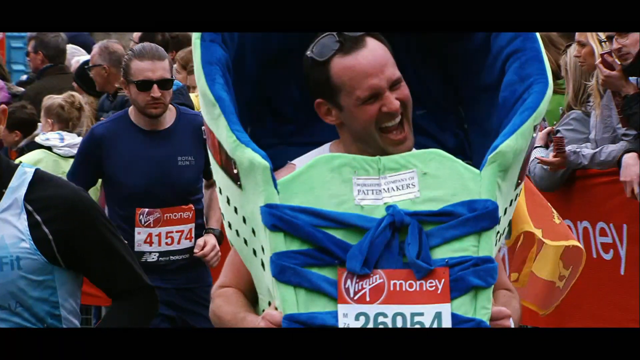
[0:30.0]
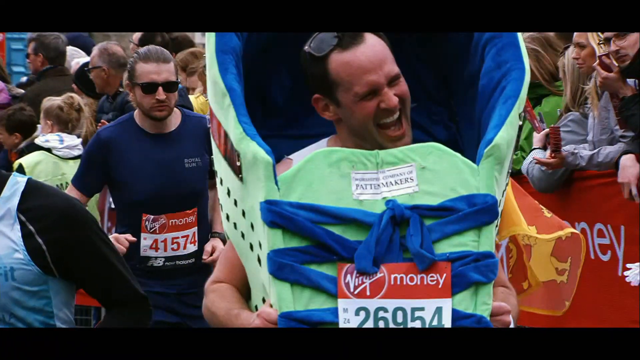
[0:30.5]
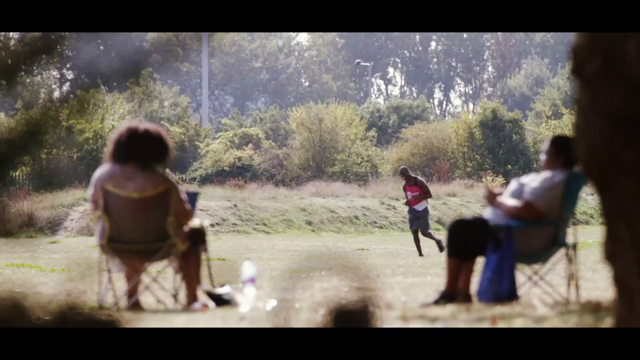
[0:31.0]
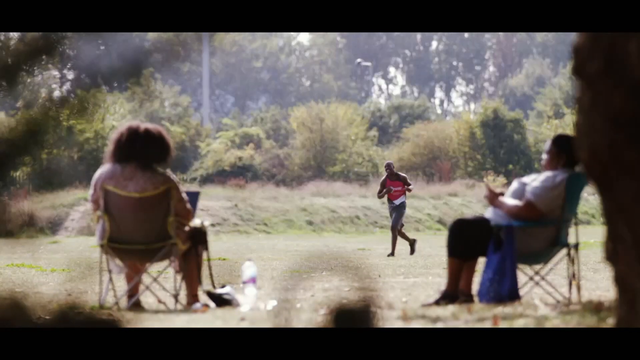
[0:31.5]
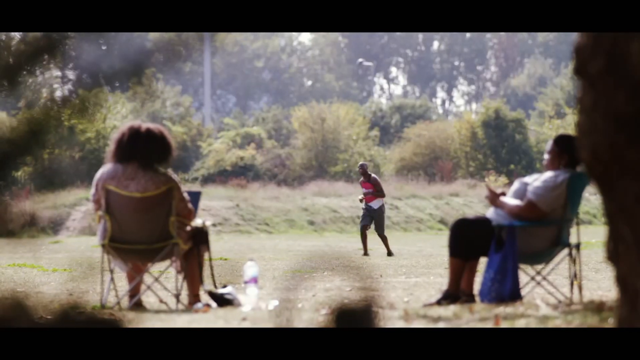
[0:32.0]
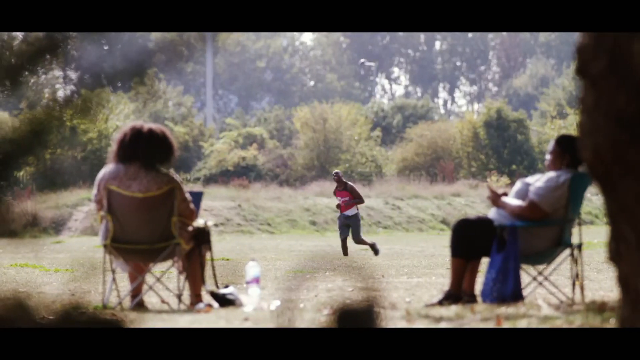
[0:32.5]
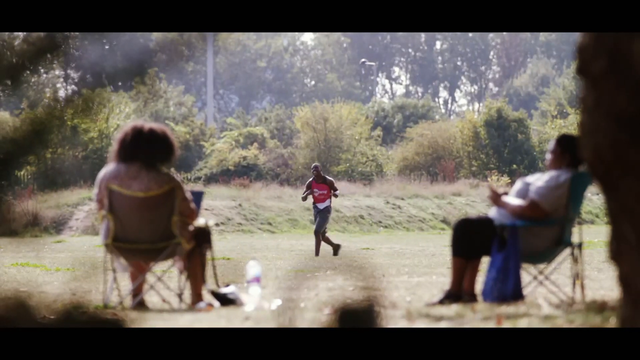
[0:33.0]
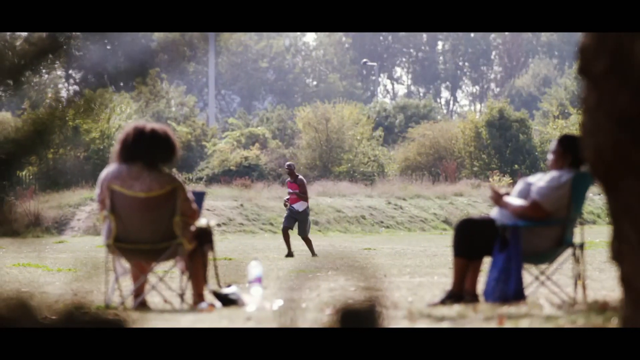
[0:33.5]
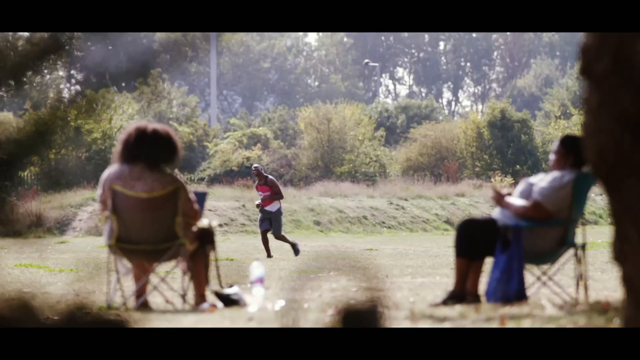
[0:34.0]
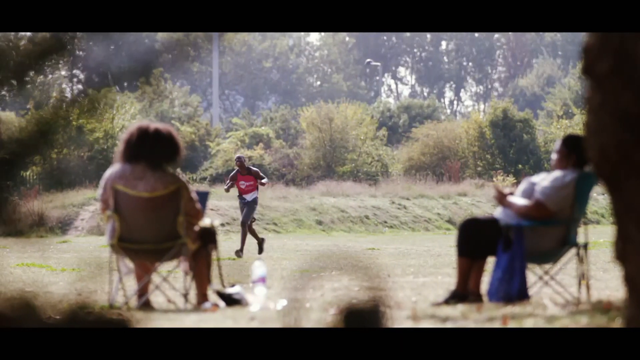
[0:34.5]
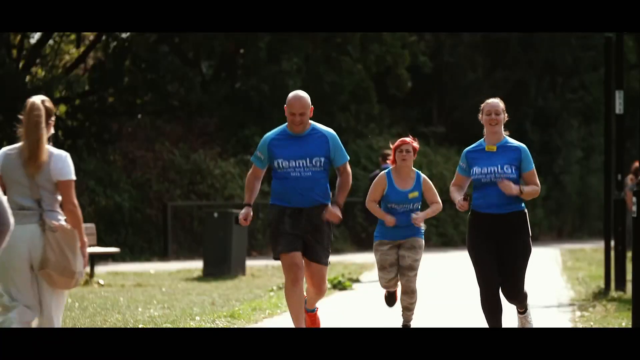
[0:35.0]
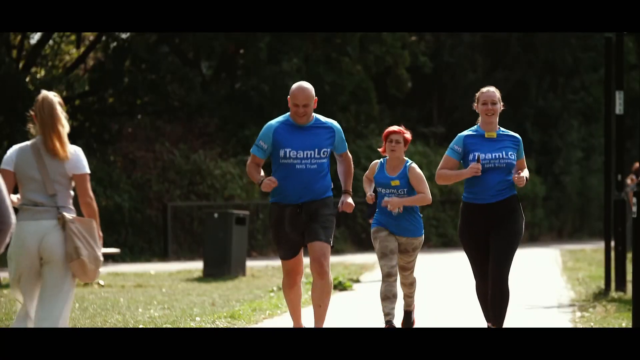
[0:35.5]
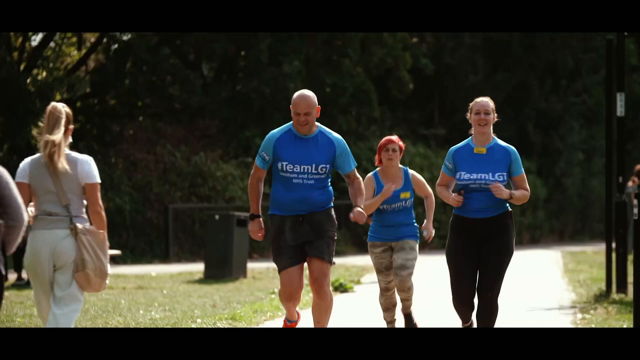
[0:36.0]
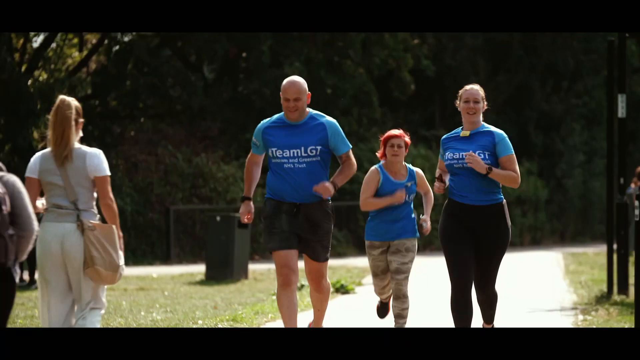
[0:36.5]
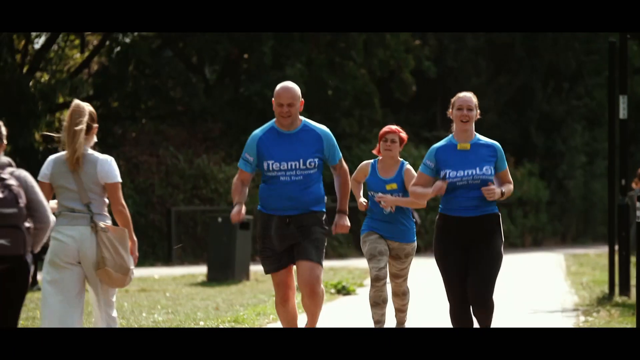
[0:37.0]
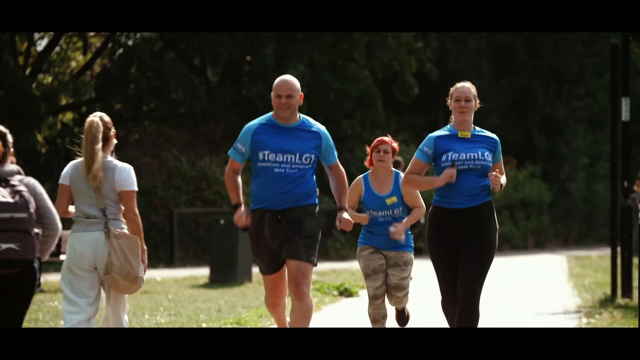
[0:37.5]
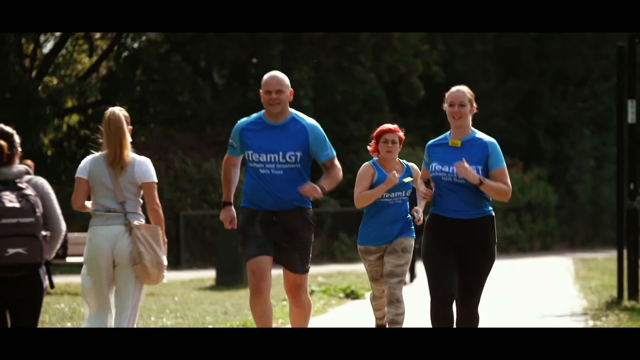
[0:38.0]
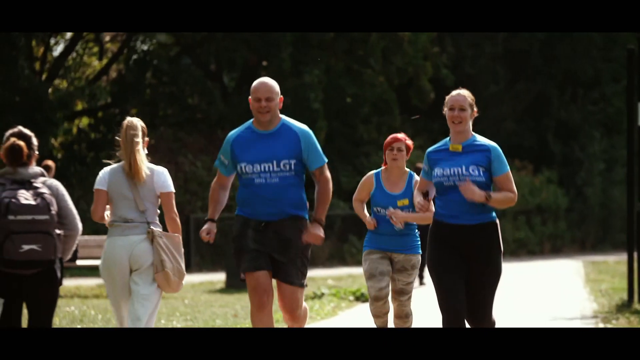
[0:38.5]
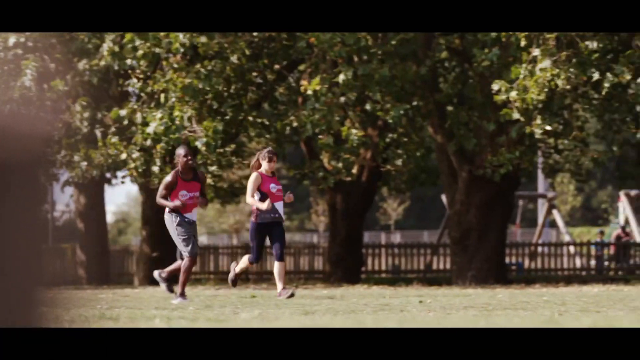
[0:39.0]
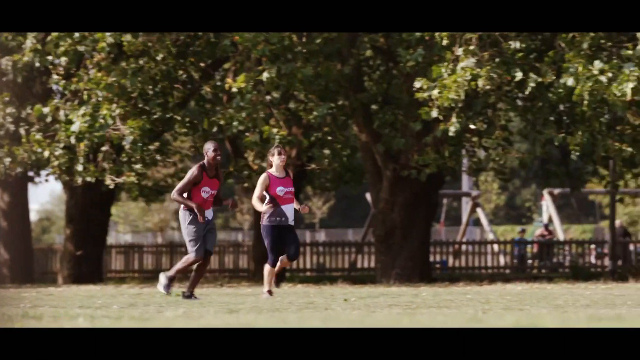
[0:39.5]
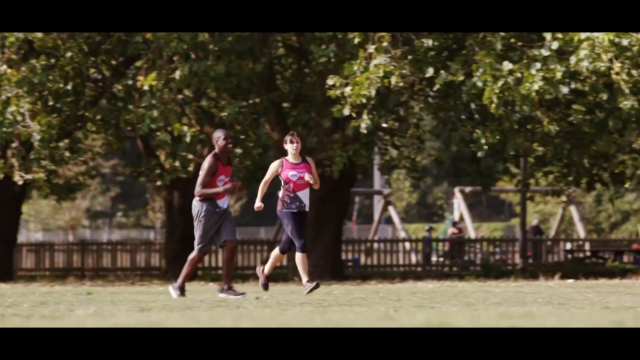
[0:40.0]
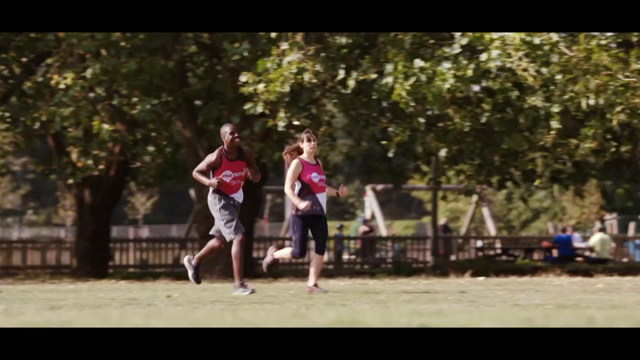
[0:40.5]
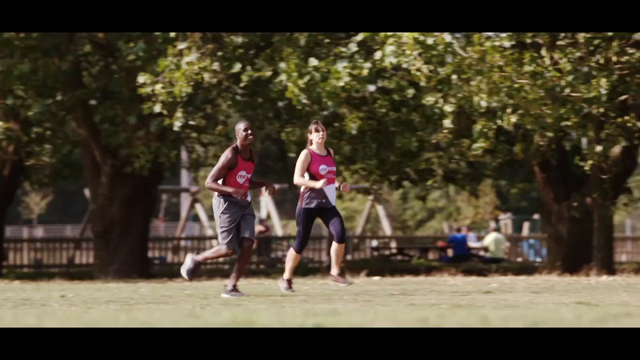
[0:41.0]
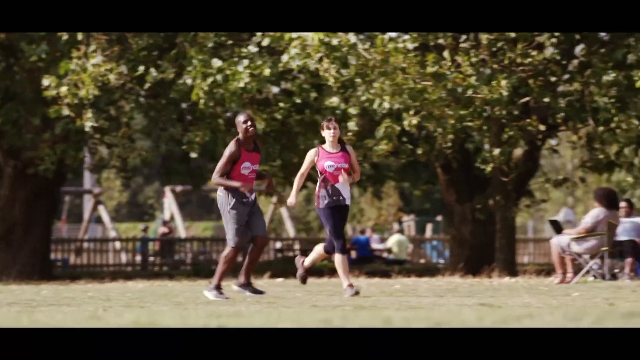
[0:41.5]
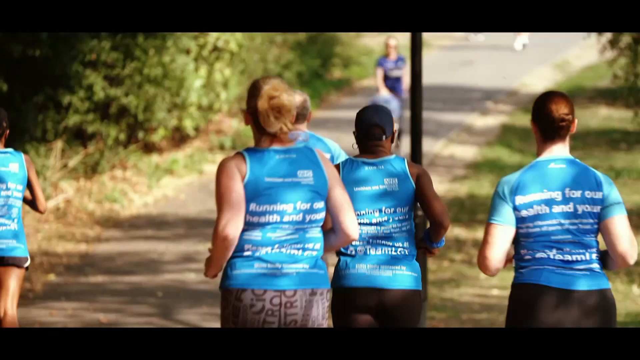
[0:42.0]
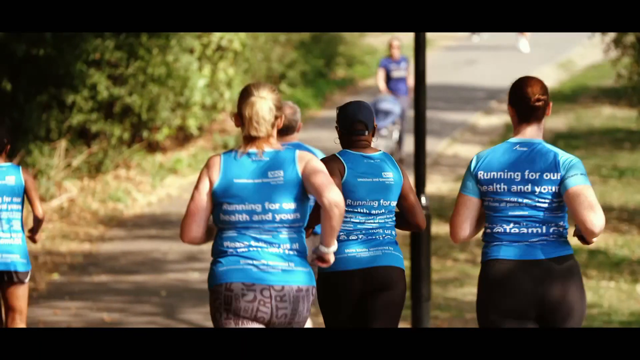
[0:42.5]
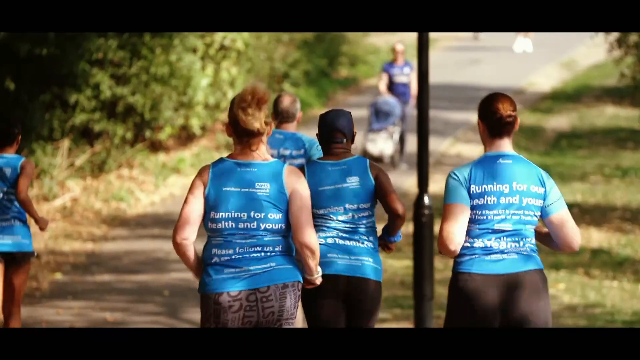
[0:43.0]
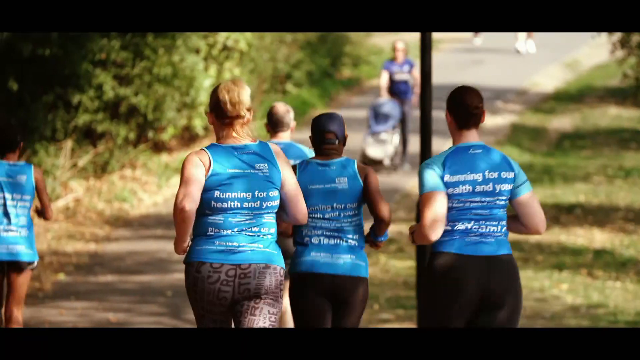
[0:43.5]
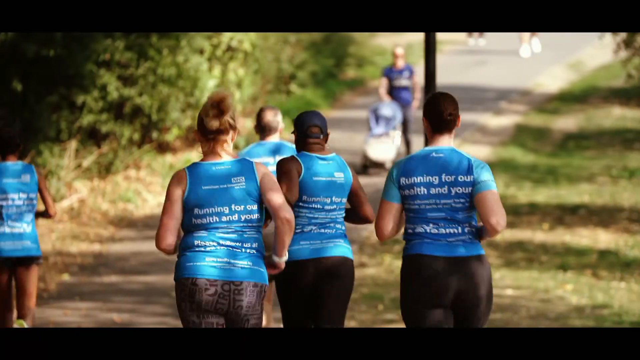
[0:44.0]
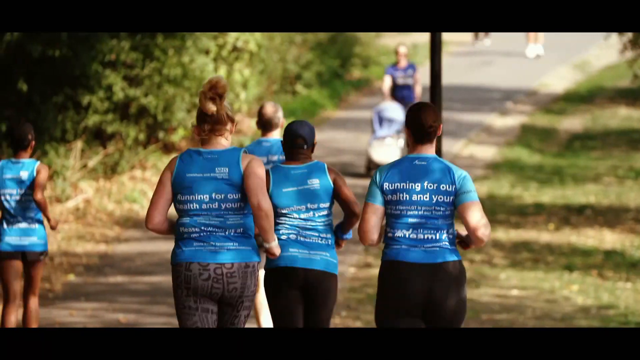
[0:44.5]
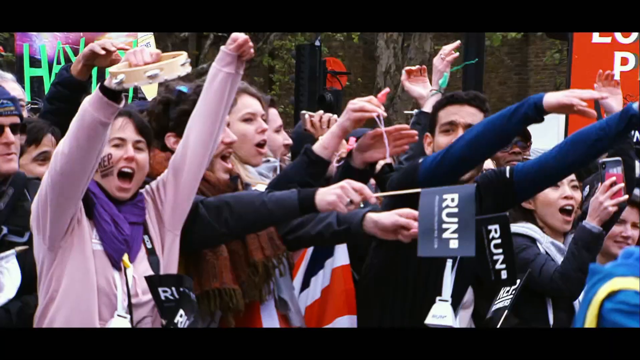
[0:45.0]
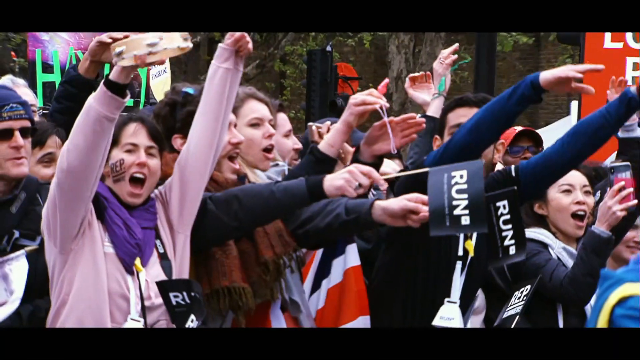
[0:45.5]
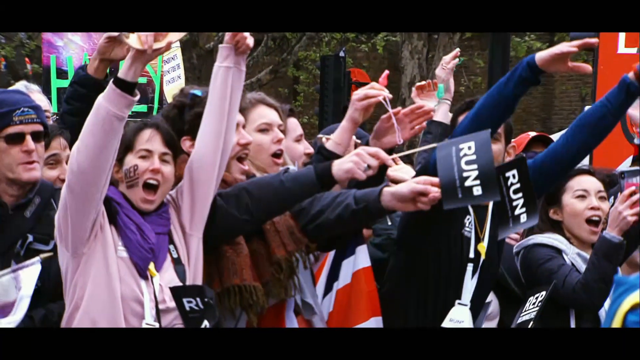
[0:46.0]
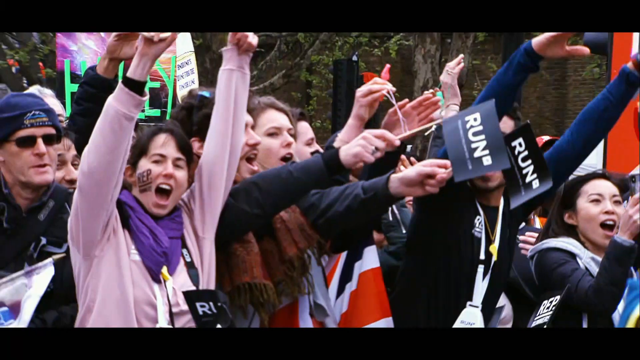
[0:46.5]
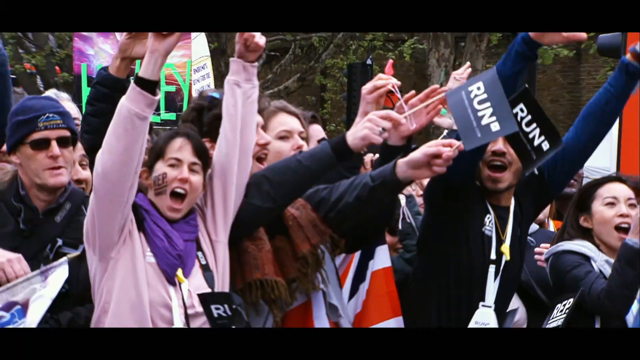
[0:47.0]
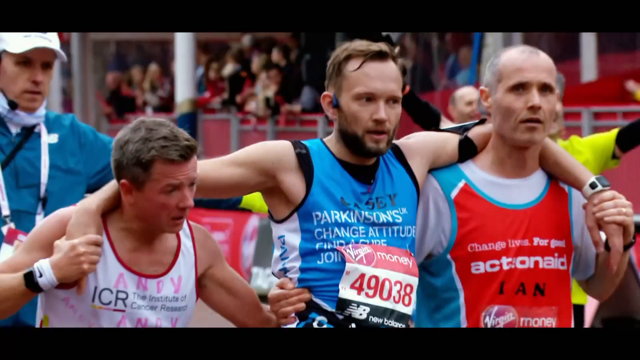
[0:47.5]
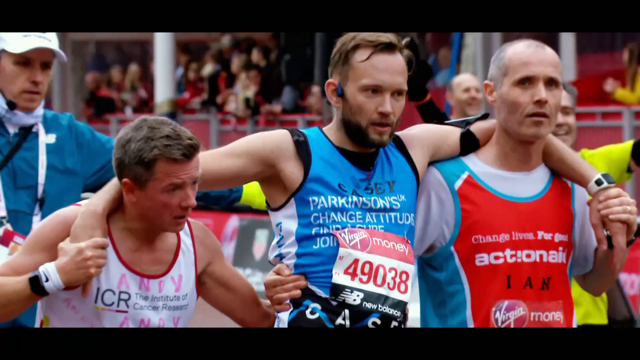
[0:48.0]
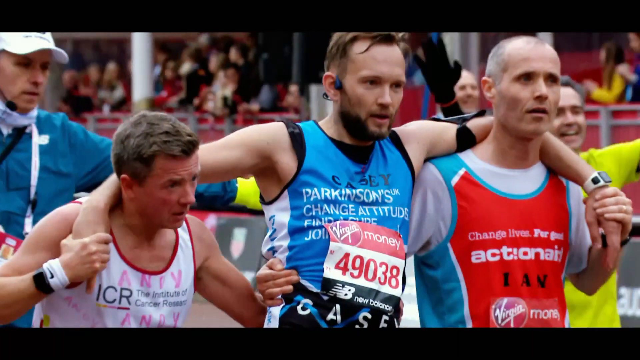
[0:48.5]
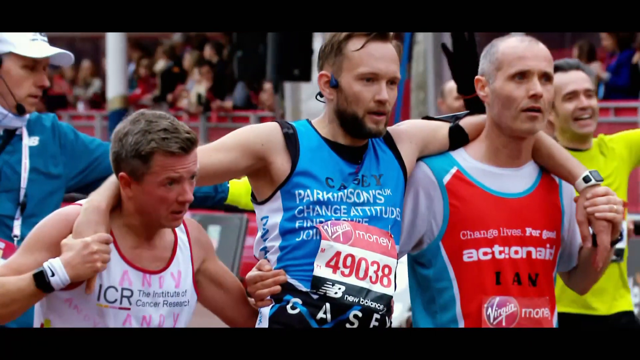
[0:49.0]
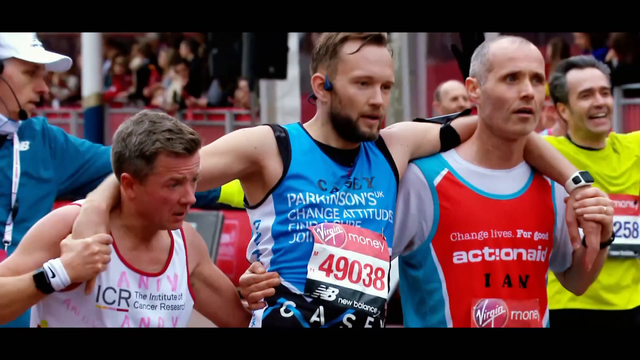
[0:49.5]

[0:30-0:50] The white man in the green and blue costume, which may be a shoe, is on screen before a transition. Next, a black woman with long curly hair sits in a camping chair on the left, and on the far right another black woman wearing black pants and a white t-shirt sits in a camping chair. A black man in a red shirt and gray shorts runs toward them in the center of the screen. The background has lots of trees, and it appears they are in a park. The scene changes to three people in blue t-shirts, one man and two women, running toward the camera, while a woman with blonde hair in a ponytail, wearing a light-colored t-shirt, light-colored pants and a light-colored purse, walks toward them. Everything is still in slow motion. Then two runners run in slow motion in what appears to be a park with lots of trees and grass; they wear red jerseys, capris and running shoes. The video seems to speed up, and they are no longer in slow motion. The next shot is in slow motion again: five runners in blue shirts, backs toward the camera, run toward someone pushing a baby stroller. A crowd then cheers for the runners, holding flags that say "run", arms up and mouths open as they scream. Finally, two runners hold up a runner in the center.